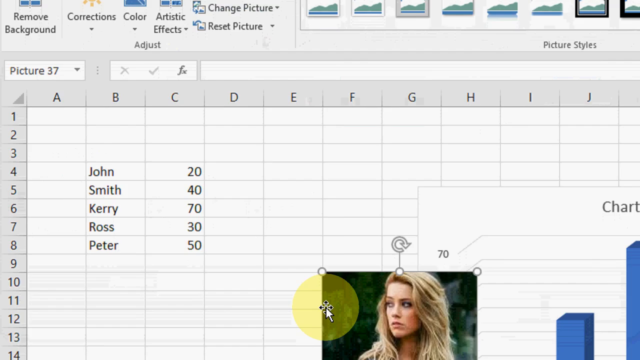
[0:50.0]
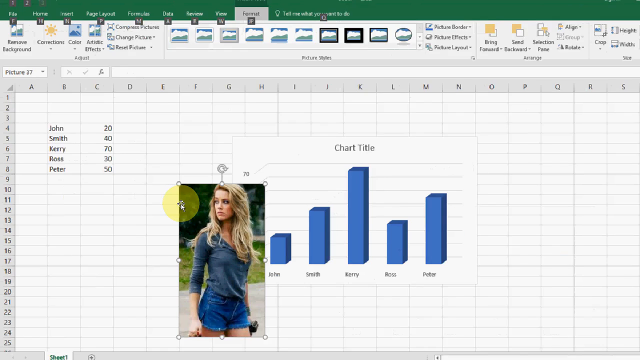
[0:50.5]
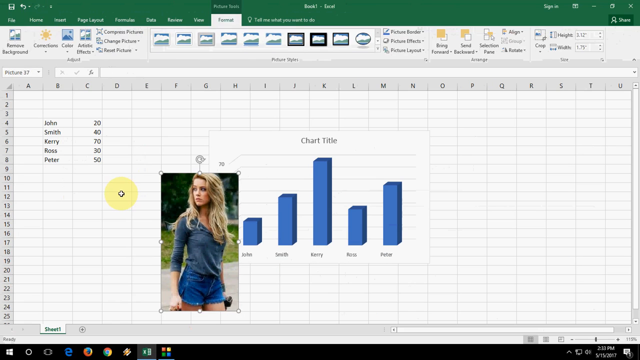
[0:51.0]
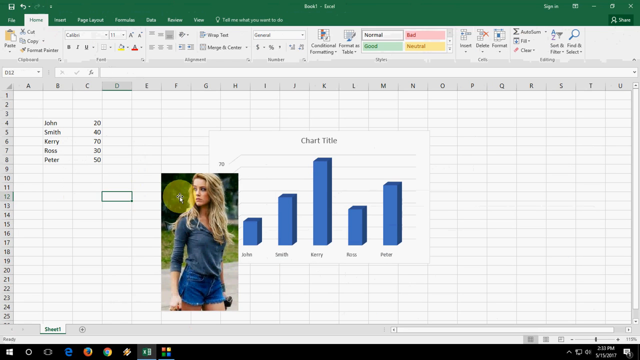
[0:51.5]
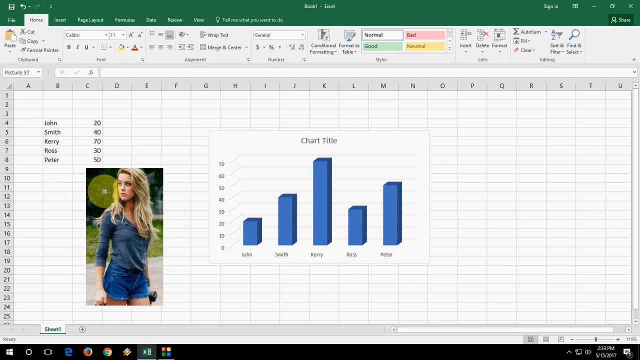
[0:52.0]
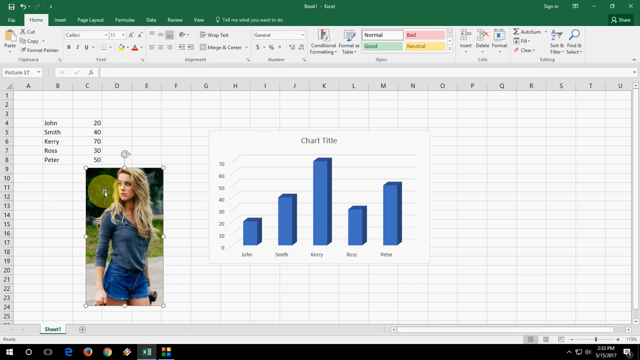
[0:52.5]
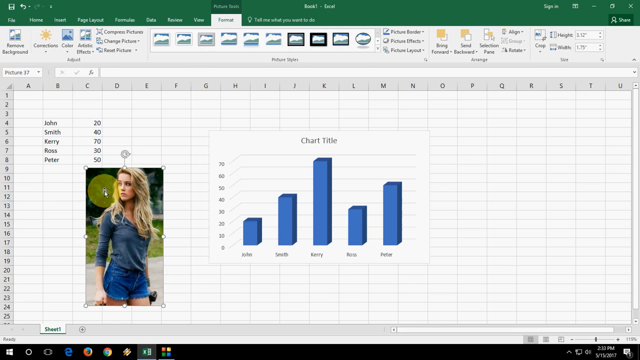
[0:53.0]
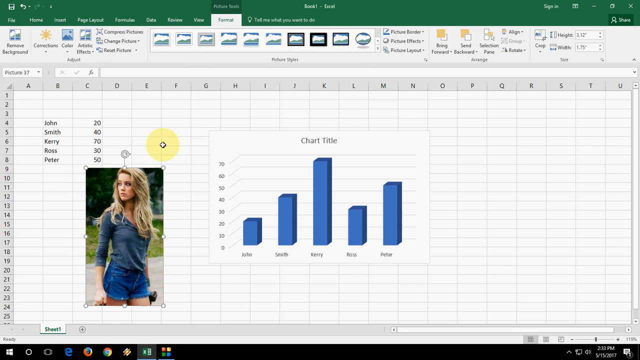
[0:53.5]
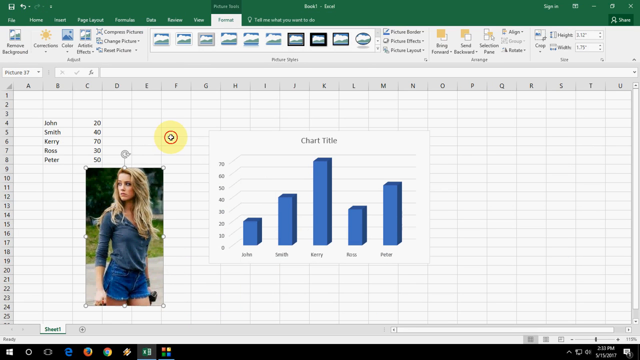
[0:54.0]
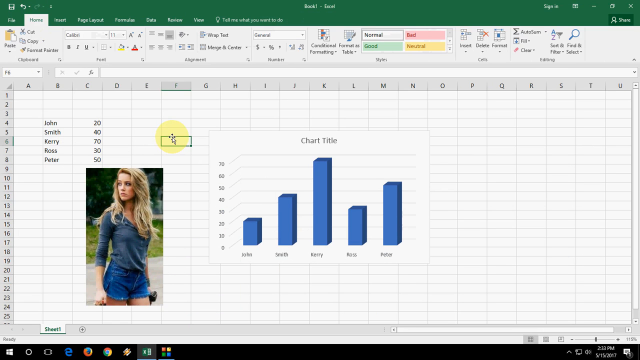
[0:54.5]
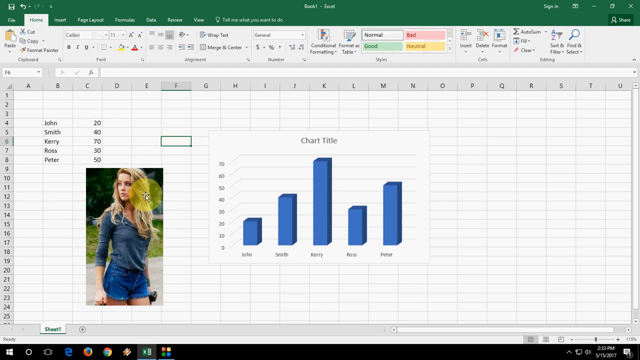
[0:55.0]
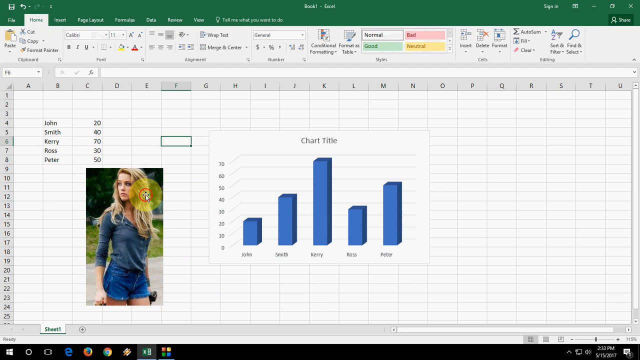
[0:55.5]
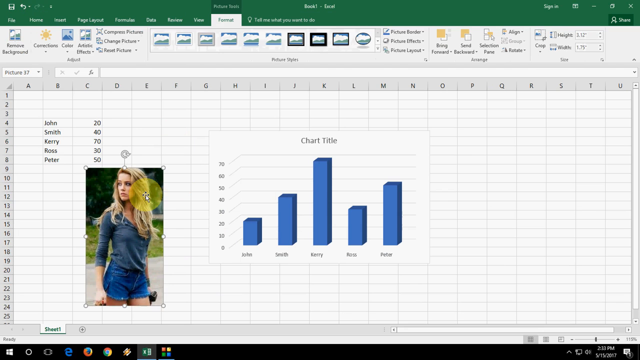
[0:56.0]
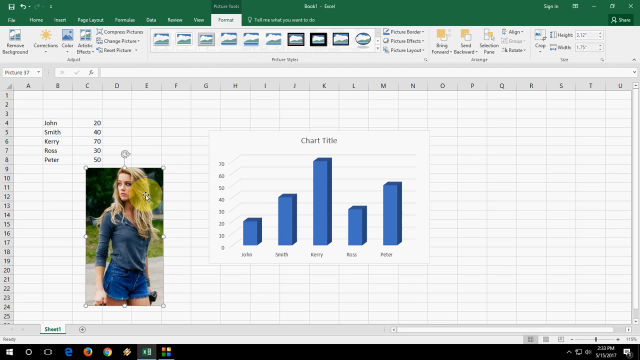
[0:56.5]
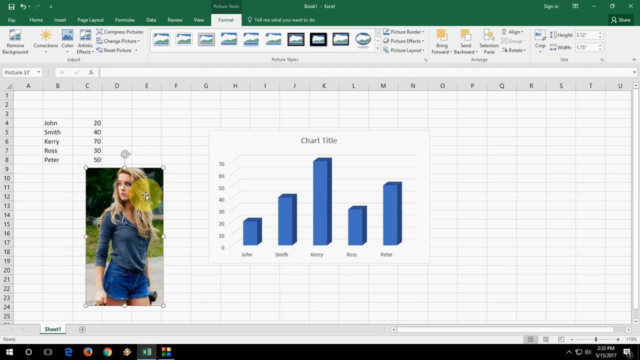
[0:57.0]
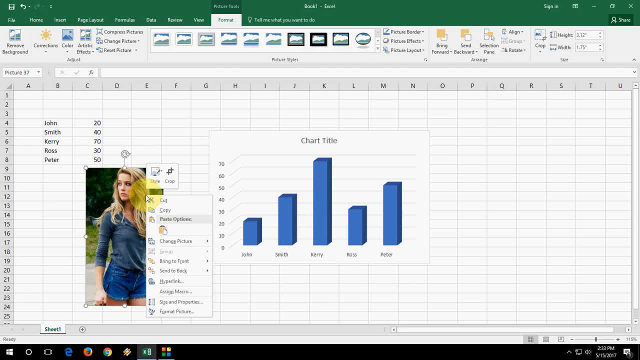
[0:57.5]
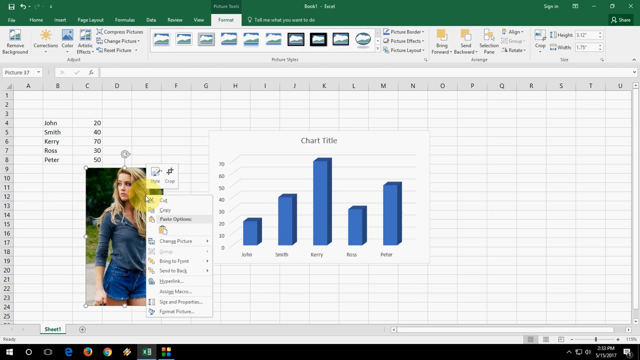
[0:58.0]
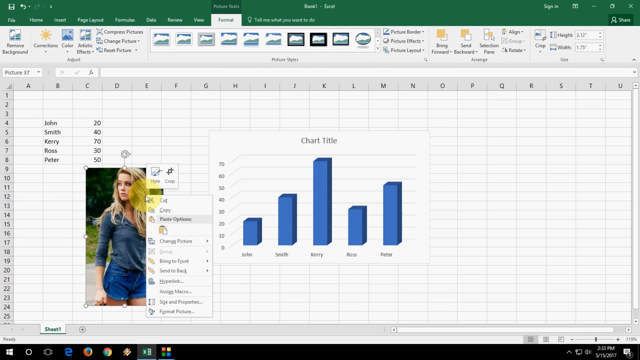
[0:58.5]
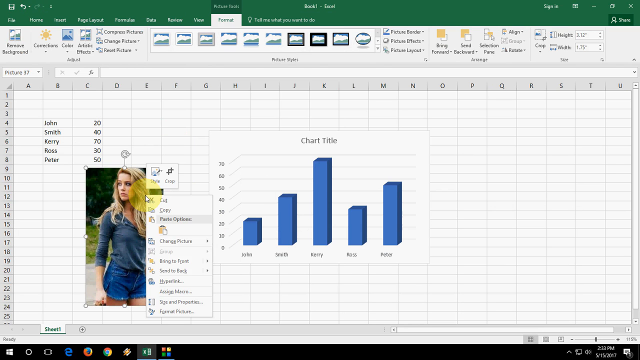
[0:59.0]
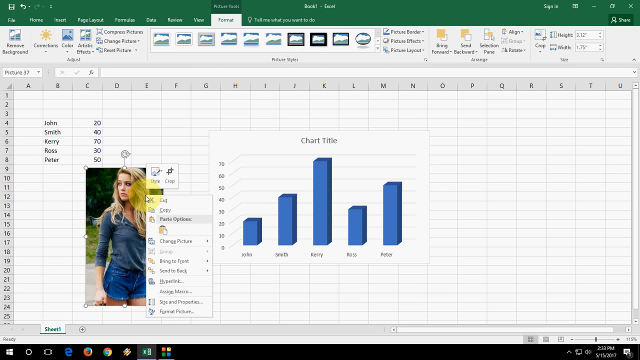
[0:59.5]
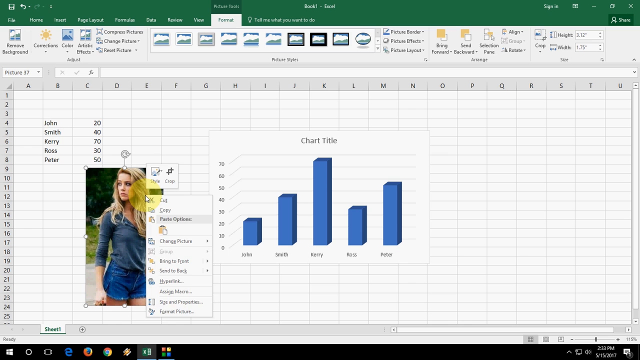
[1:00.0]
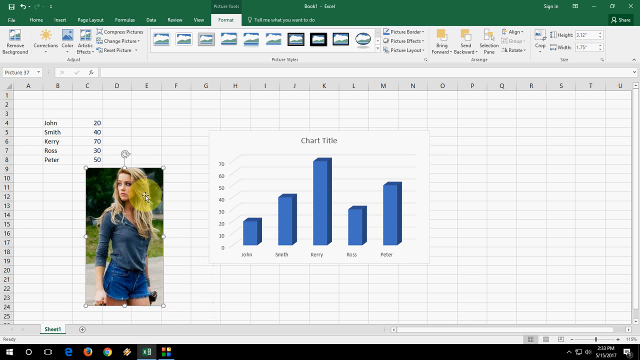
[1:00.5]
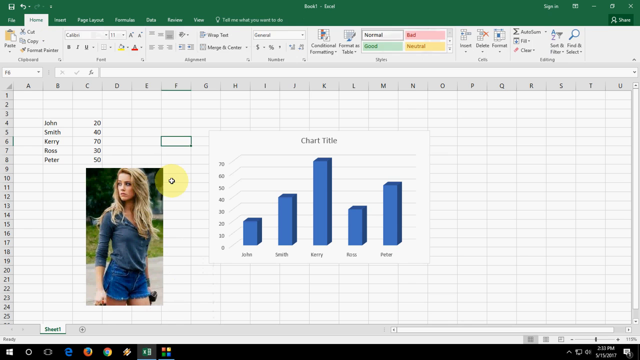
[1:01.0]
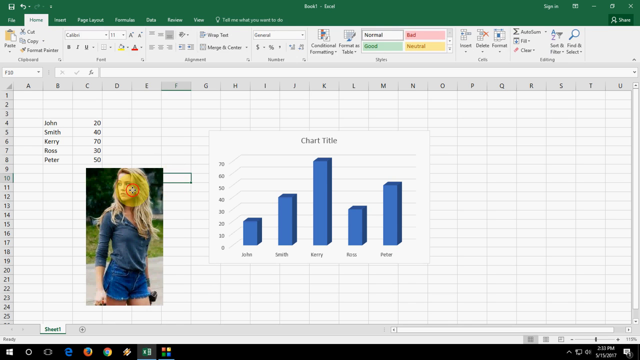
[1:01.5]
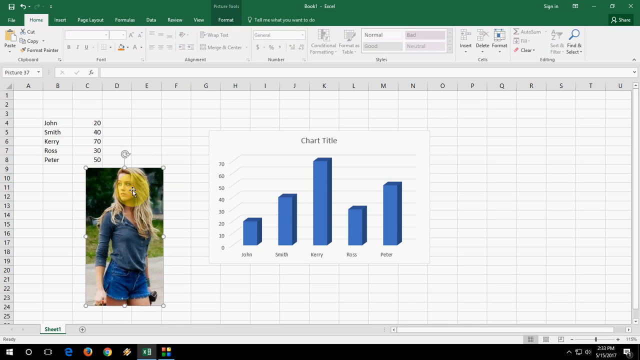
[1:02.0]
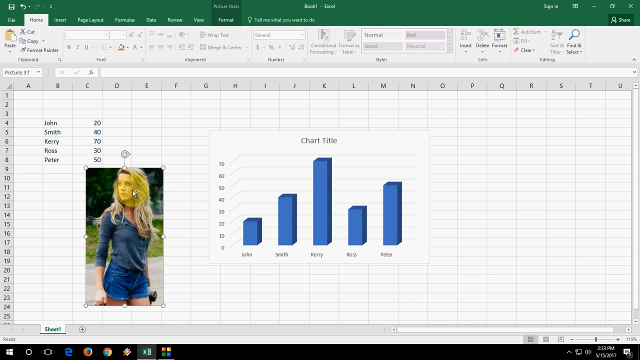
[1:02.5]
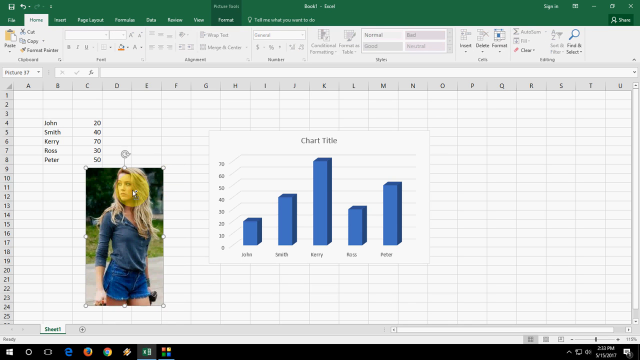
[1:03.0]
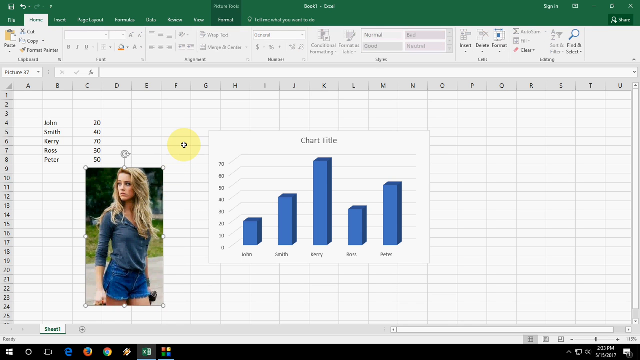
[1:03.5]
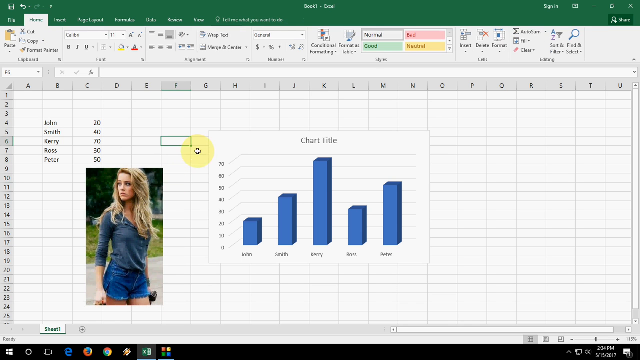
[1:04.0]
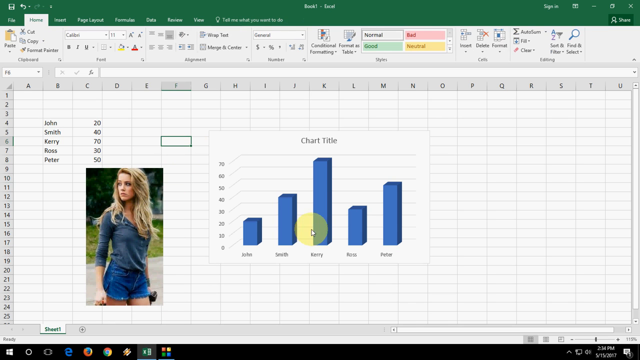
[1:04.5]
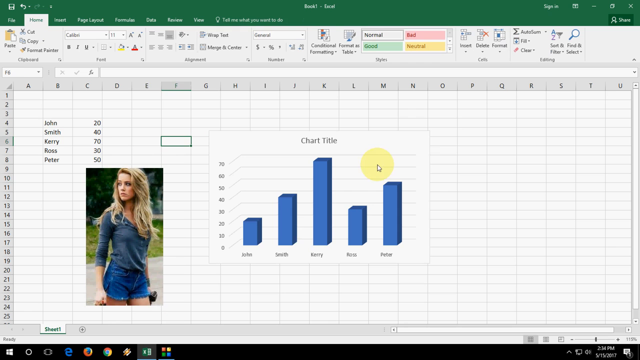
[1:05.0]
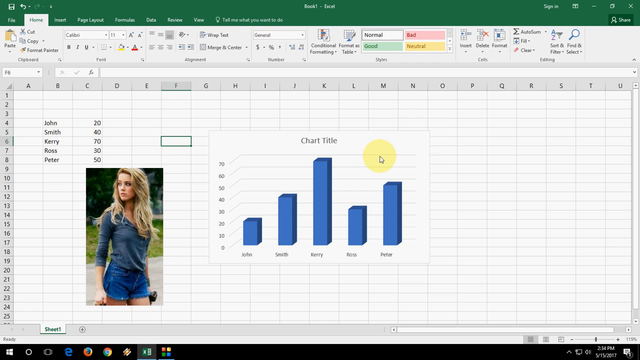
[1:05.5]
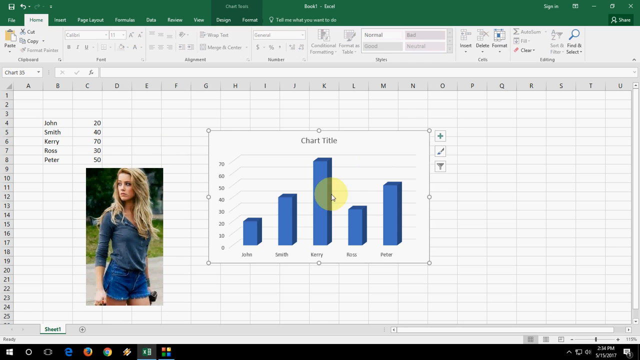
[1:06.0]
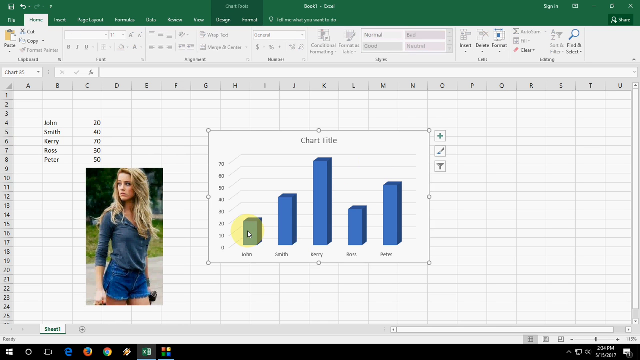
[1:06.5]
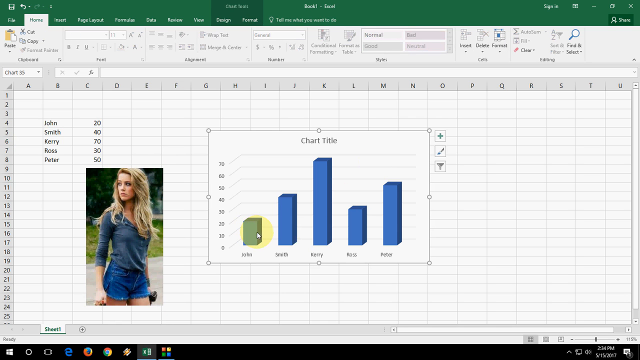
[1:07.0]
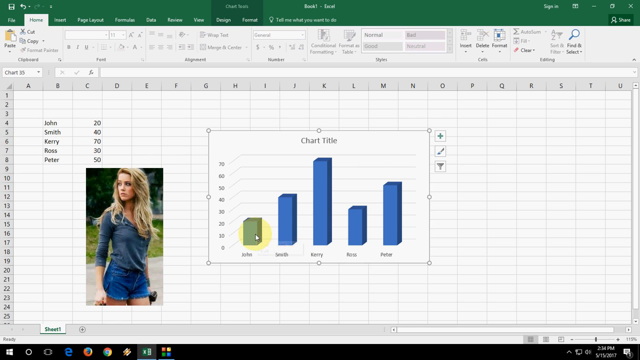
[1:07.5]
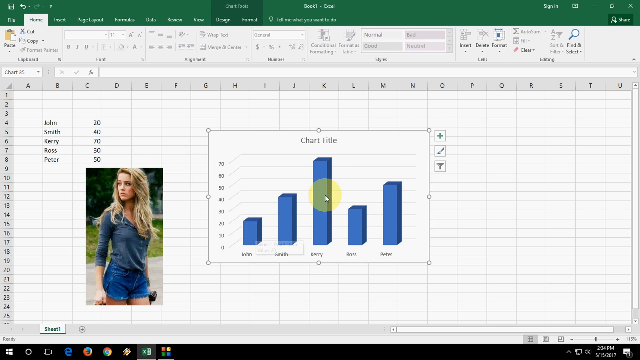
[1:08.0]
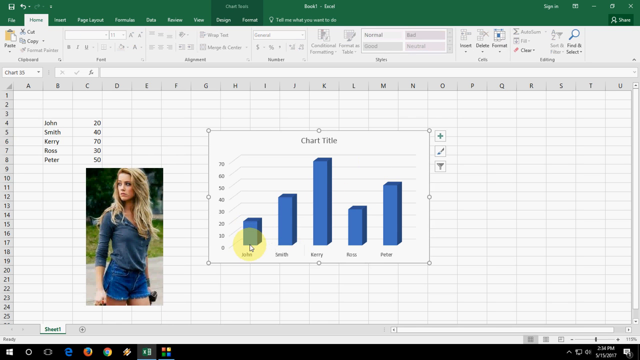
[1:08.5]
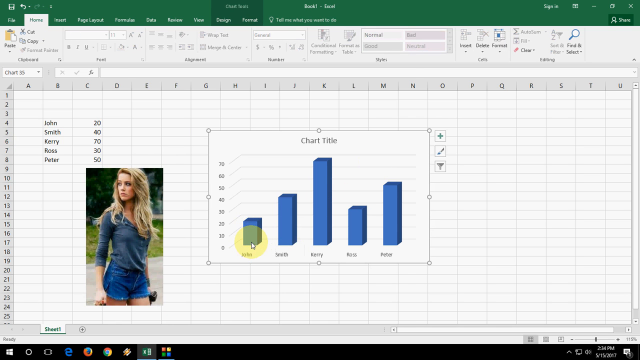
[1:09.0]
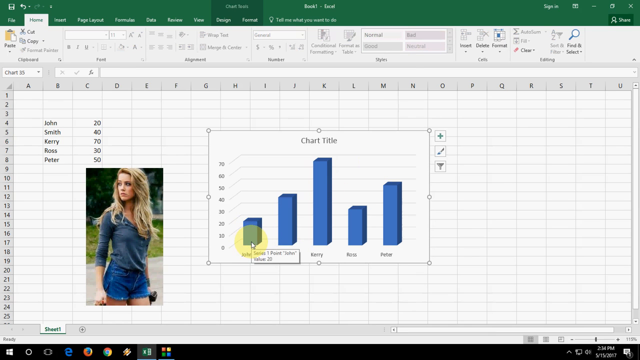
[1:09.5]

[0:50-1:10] A Windows Excel spreadsheet is on a Windows PC monitor, with its left corner blown up. The columns are labeled A through H or A through J, and the rows are numbered 1 through 14. Boxes 4C to 8C hold names and numbers. A cursor with a yellow circle around it drags an image of a woman, a photograph, to underneath the names, creating a new box. It then moves to the chart title pop-up box in the middle of the page and scrolls around it. The names are represented in the chart by blue square columns of different heights.